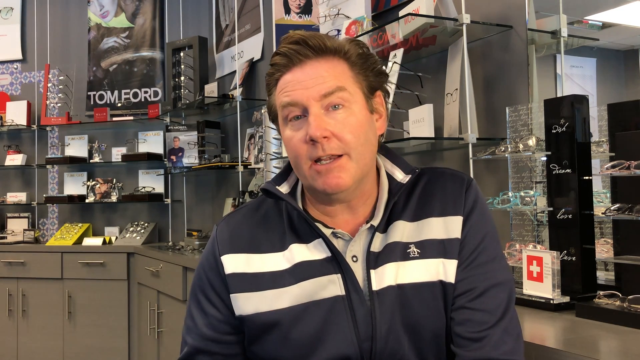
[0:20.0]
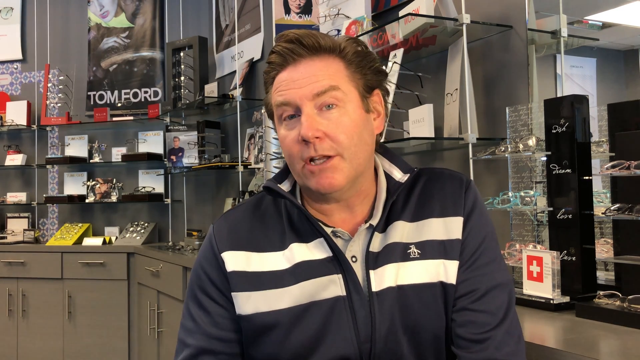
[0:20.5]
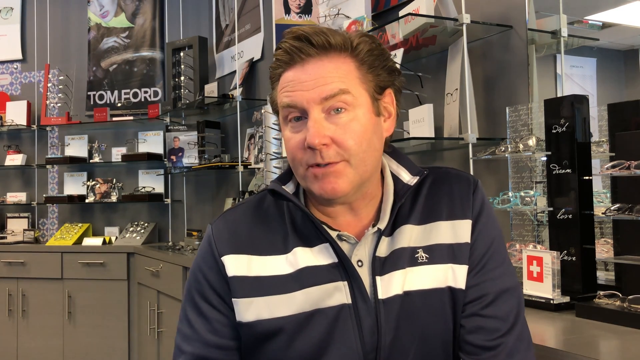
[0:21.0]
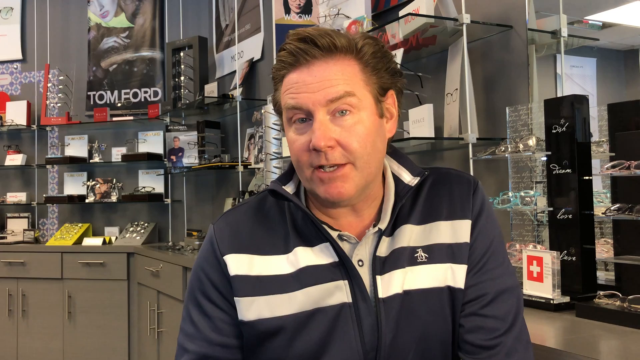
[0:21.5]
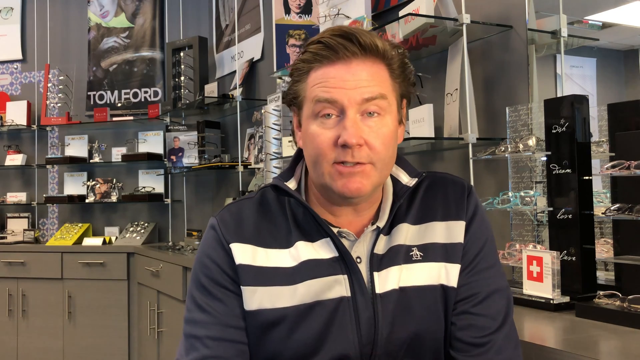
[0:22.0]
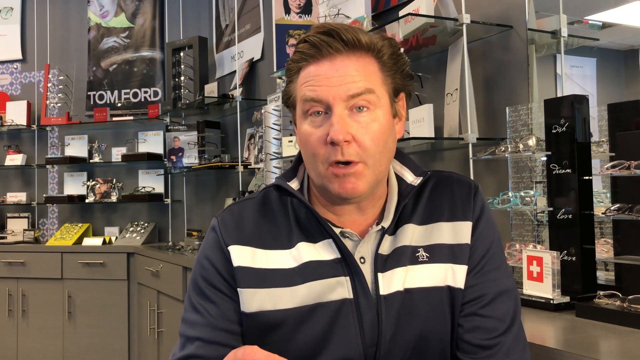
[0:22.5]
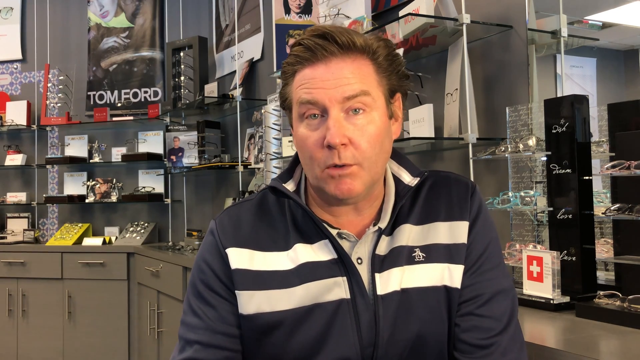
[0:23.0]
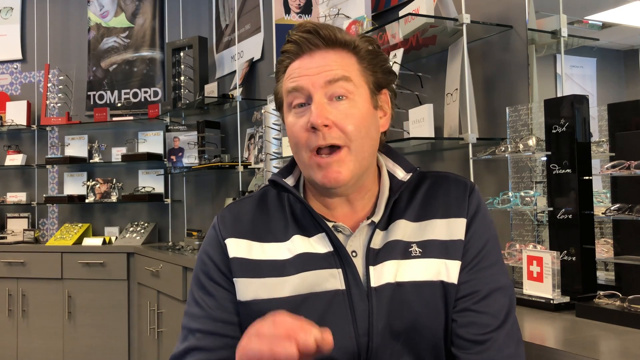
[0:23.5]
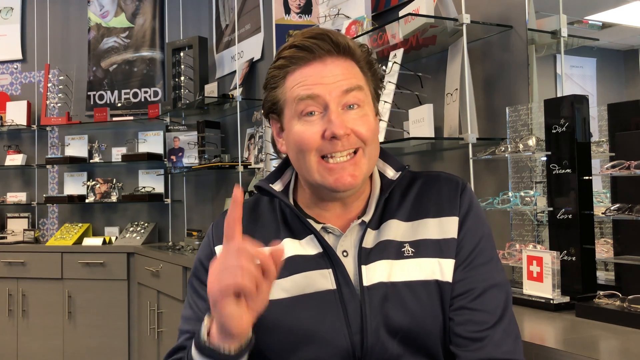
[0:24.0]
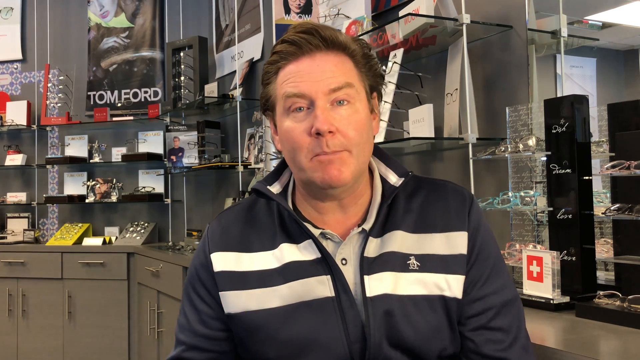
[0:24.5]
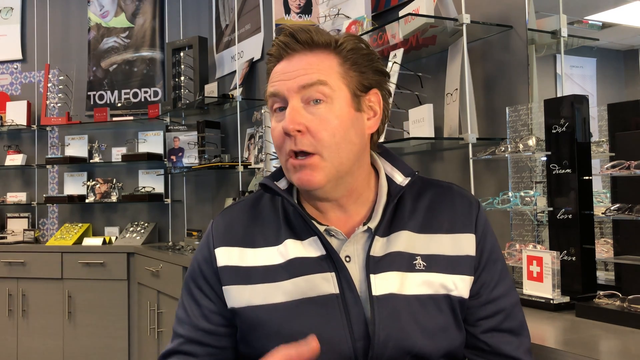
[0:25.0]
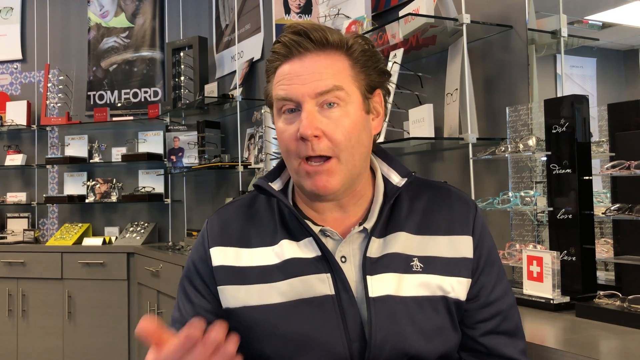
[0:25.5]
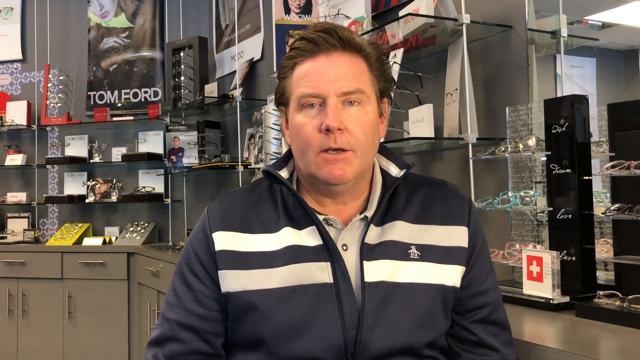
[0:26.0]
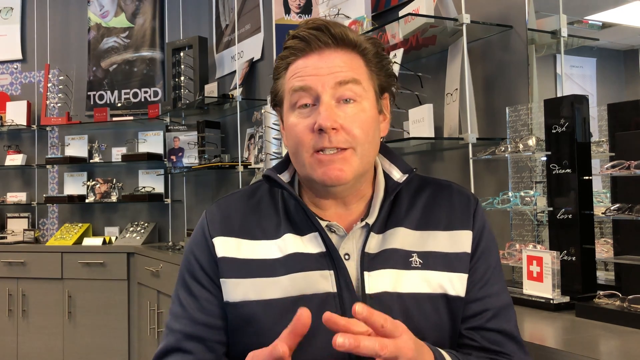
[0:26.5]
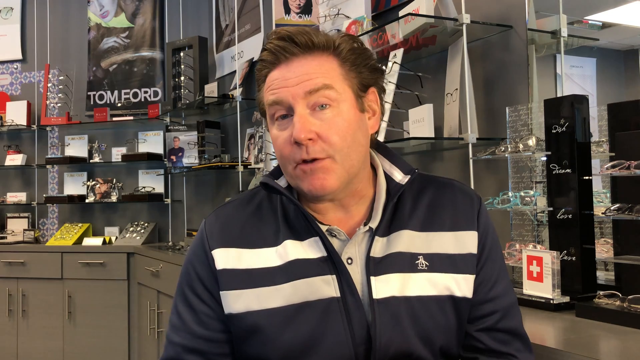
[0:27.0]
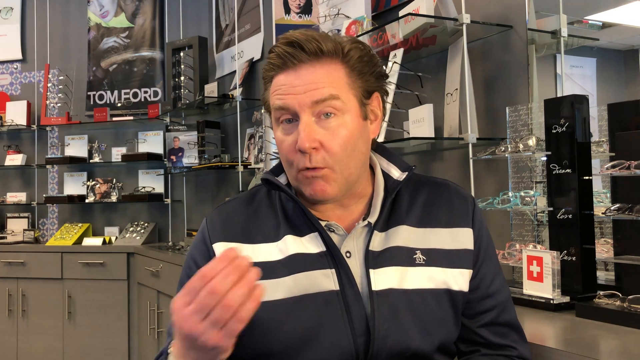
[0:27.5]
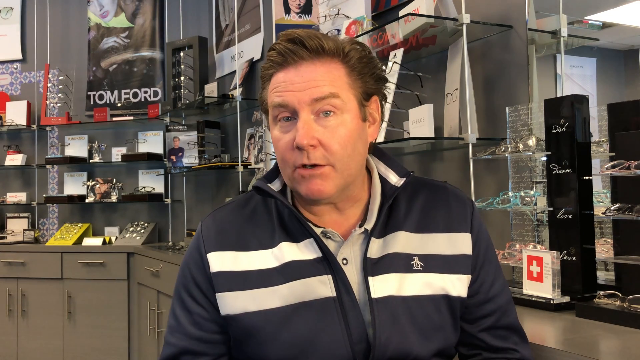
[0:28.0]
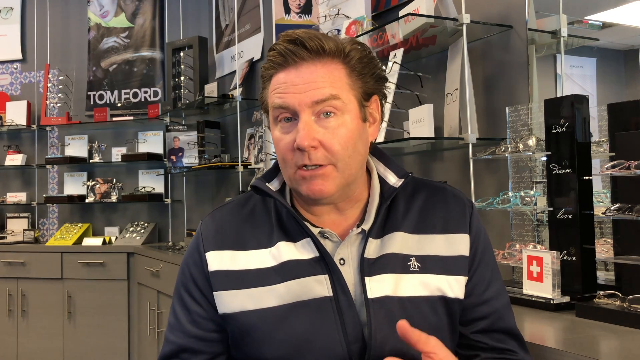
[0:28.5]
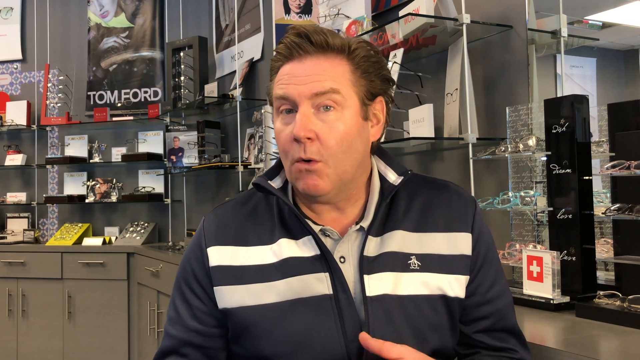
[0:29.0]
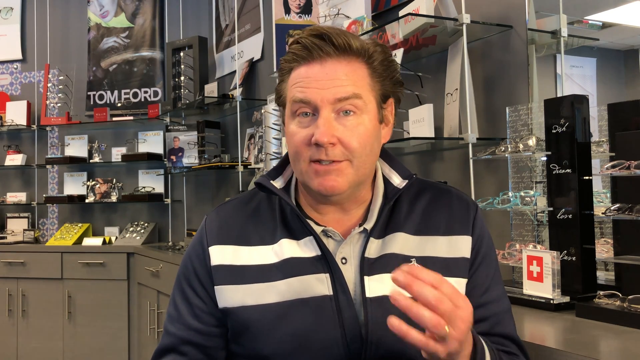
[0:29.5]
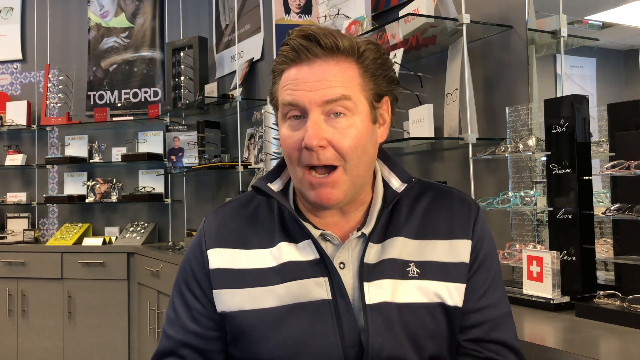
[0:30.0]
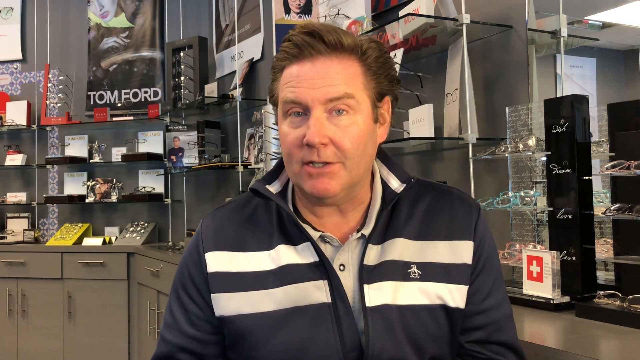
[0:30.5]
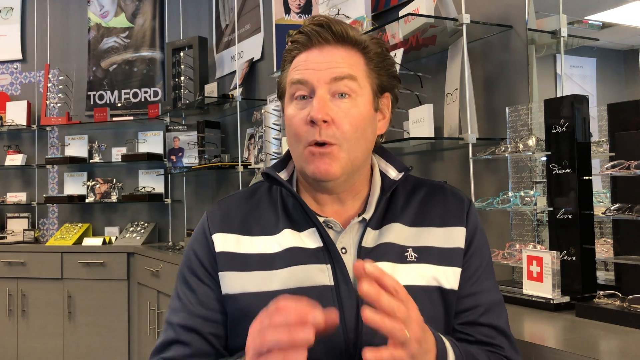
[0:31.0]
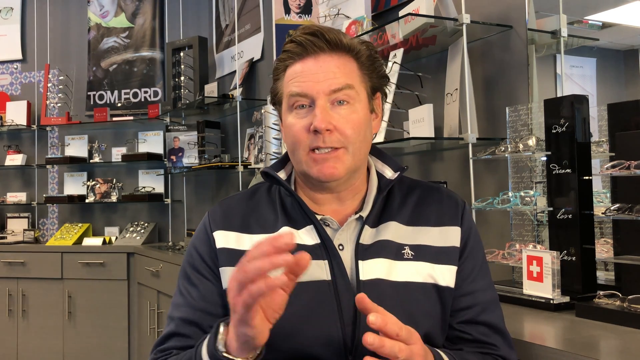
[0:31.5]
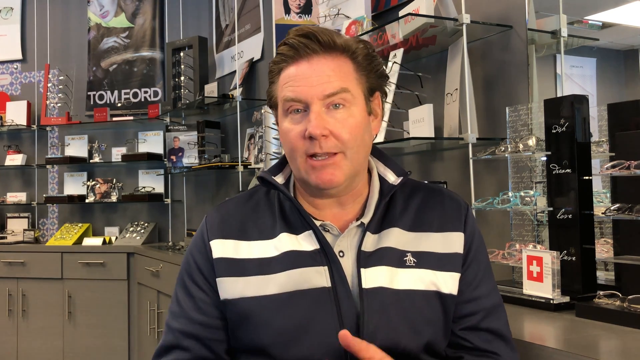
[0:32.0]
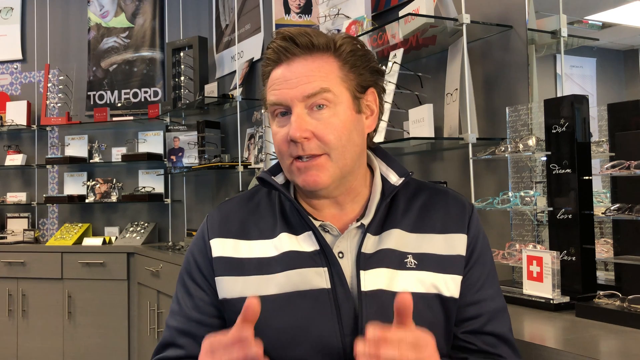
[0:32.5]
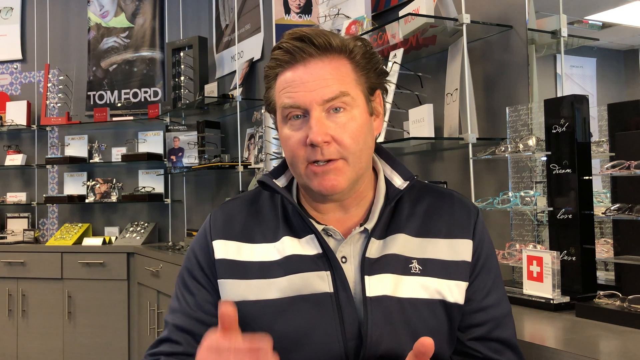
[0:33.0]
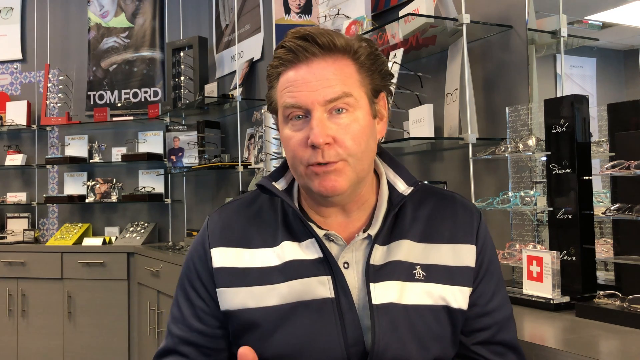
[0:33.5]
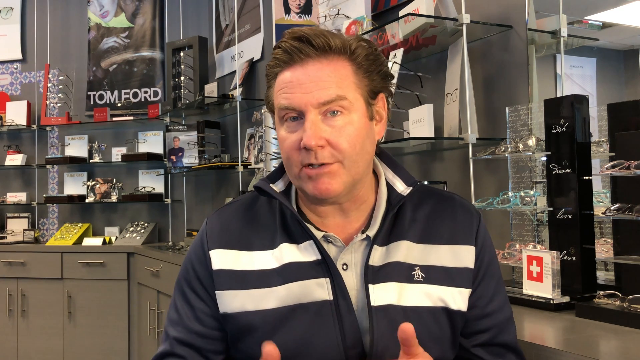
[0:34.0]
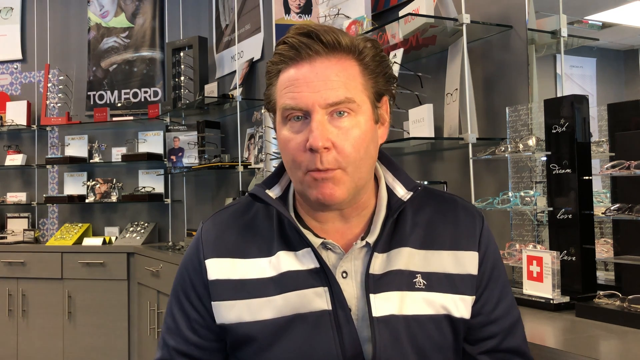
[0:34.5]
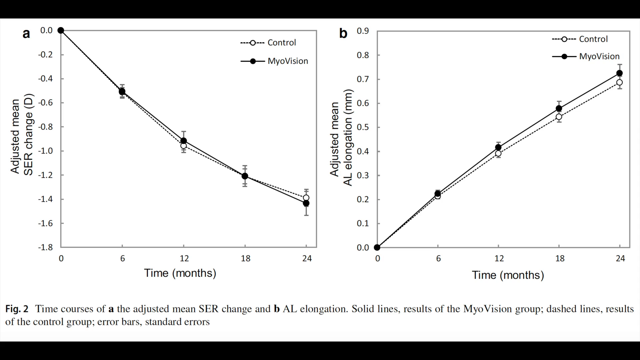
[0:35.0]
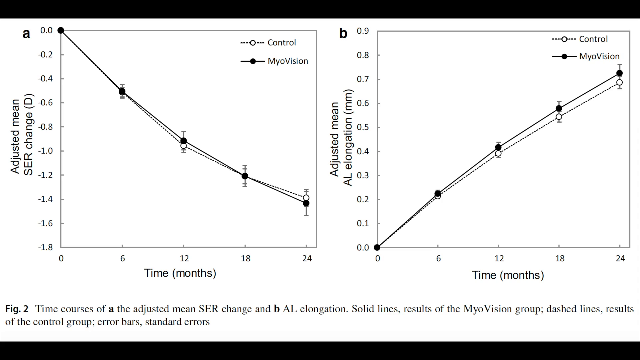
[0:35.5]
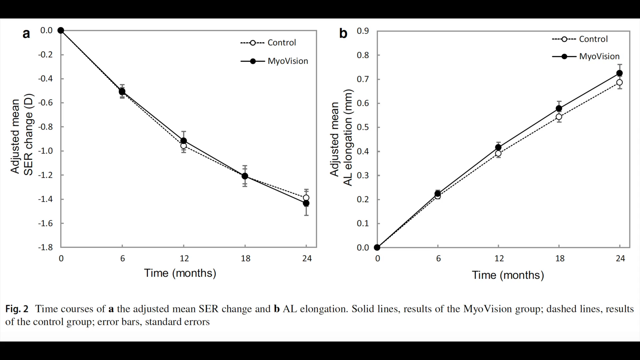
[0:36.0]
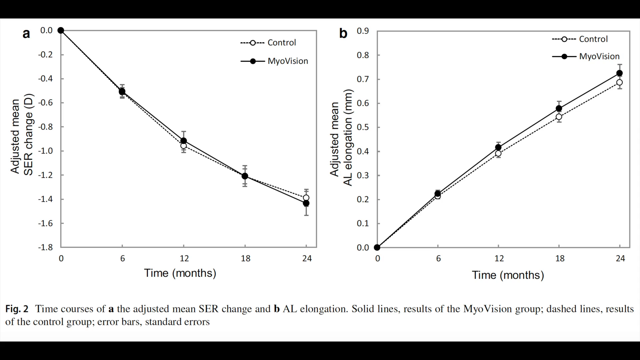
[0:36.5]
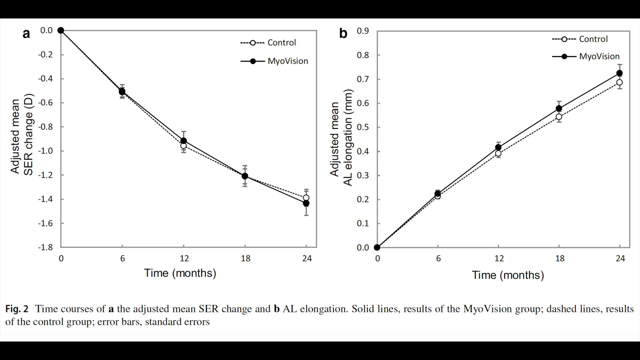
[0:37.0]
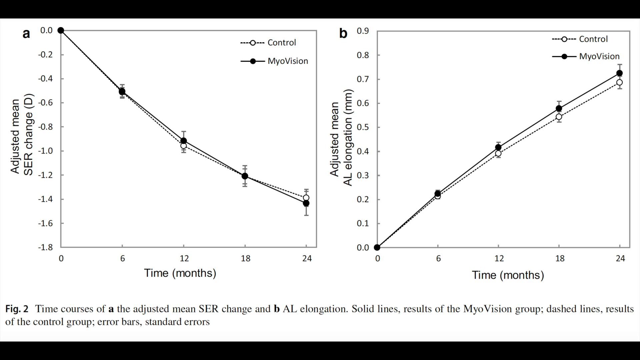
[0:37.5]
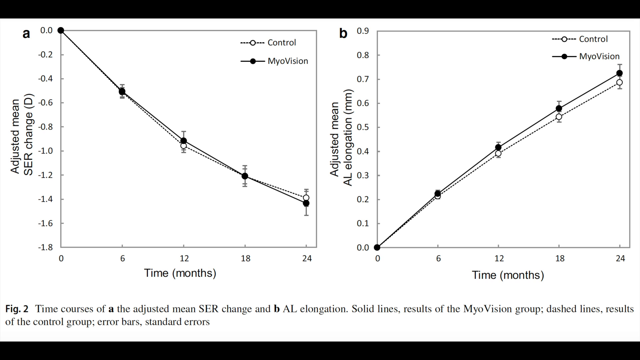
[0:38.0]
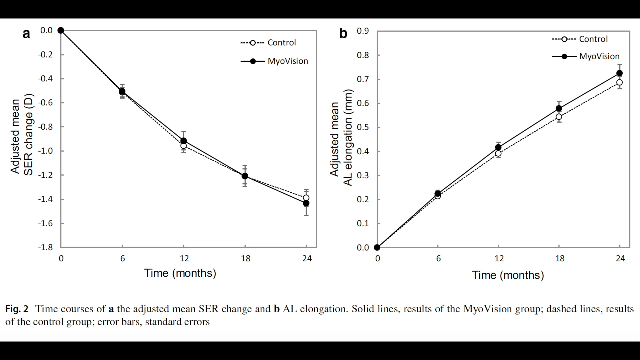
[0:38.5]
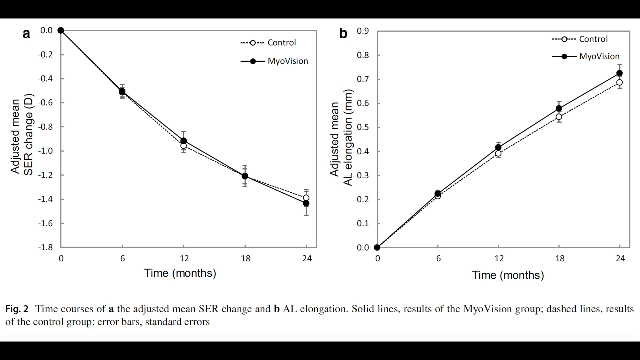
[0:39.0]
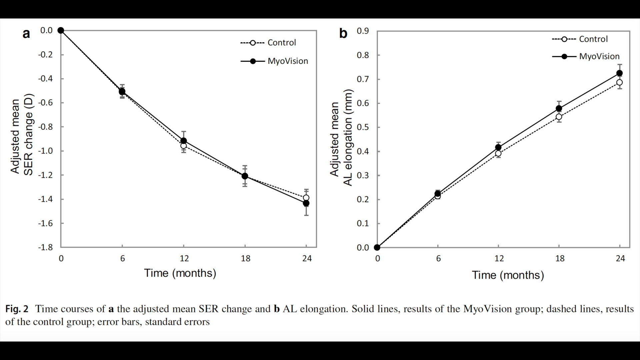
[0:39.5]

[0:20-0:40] The Caucasian man with short brown hair and white skin wears a dark navy blue shirt with white patches. Behind him are a Tom Ford poster and many jewelry pieces, in an environment that may be a beauty shop, salon or jewelry store; some cupboards are also visible. The video then transitions to a screen with a white background showing information about control and vision groups in a chart, possibly a graph, with "adjusted means" and "time in months". Text reads "figure two time courses of the adjusted mean, SCR change" and "dashed line results of the control group". The man is an optometrist, in a sort of eye-care environment.